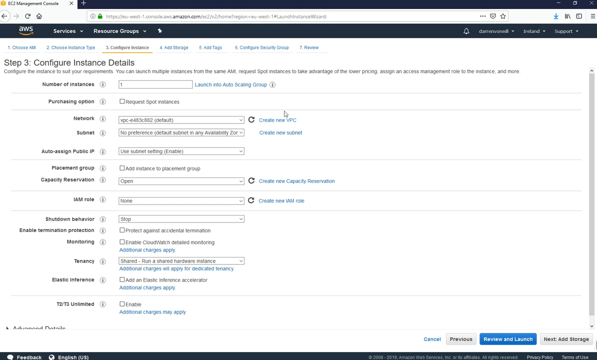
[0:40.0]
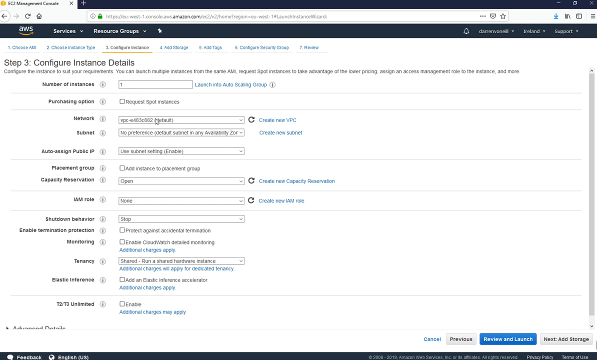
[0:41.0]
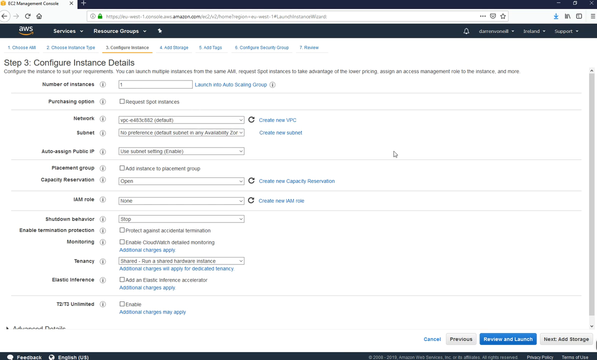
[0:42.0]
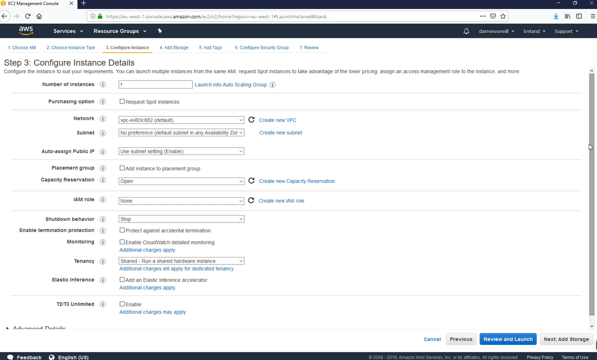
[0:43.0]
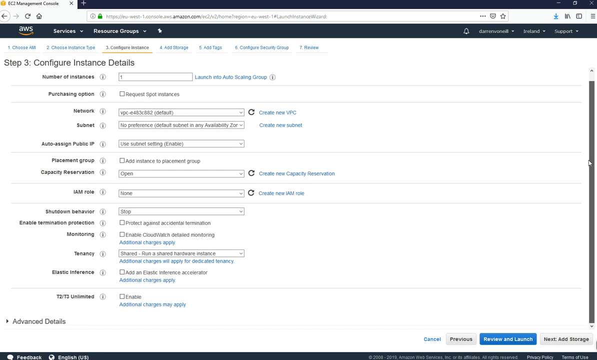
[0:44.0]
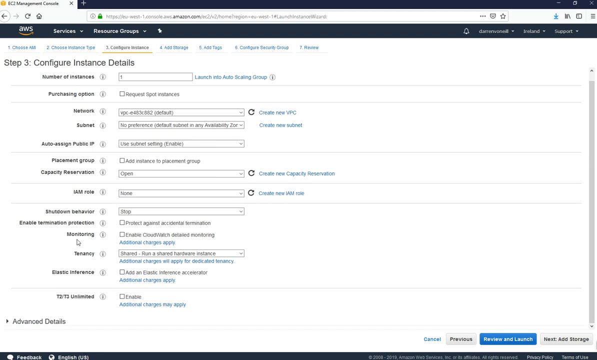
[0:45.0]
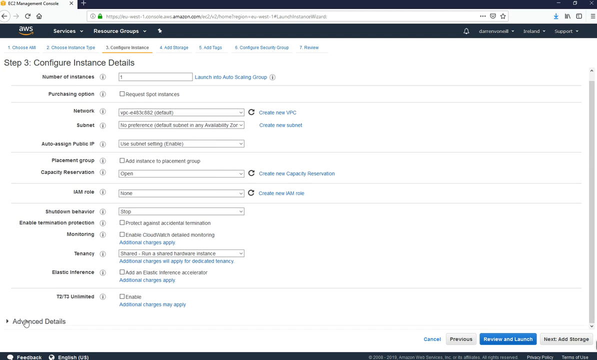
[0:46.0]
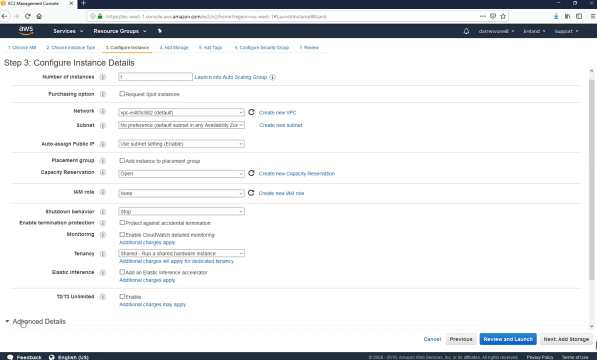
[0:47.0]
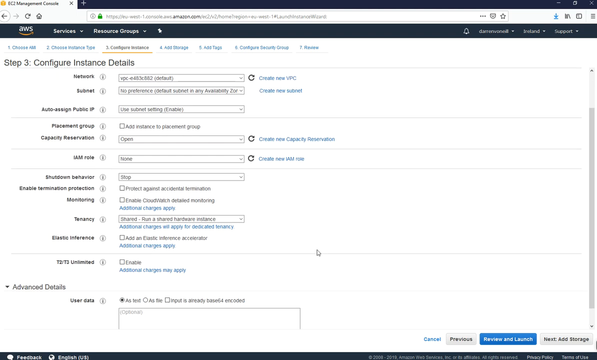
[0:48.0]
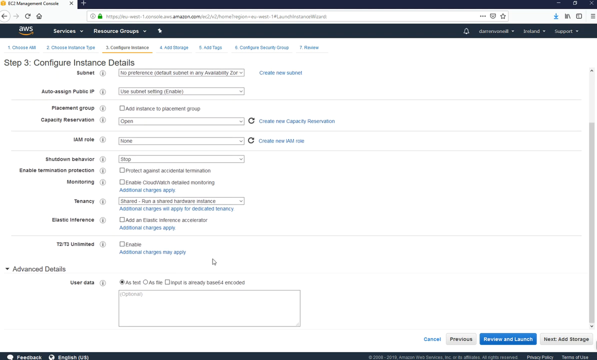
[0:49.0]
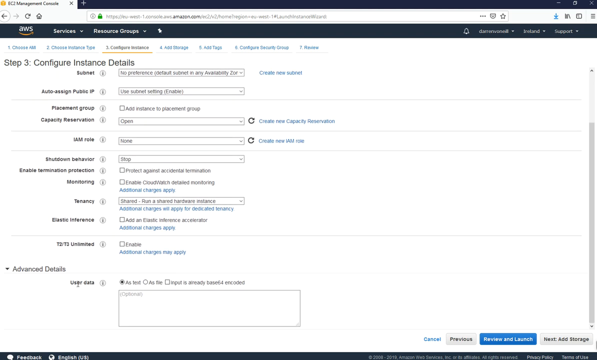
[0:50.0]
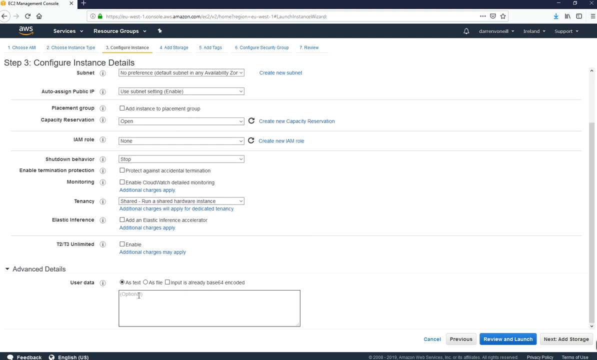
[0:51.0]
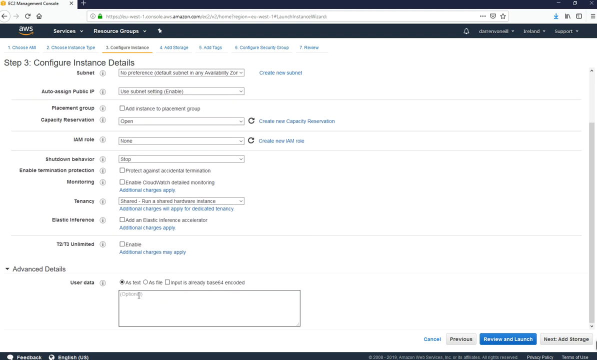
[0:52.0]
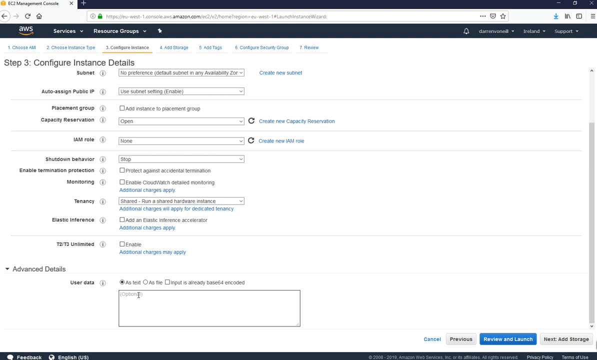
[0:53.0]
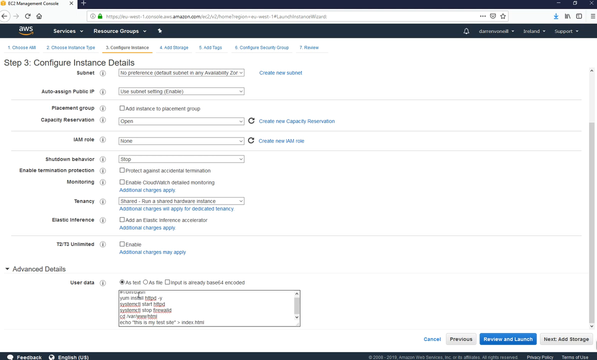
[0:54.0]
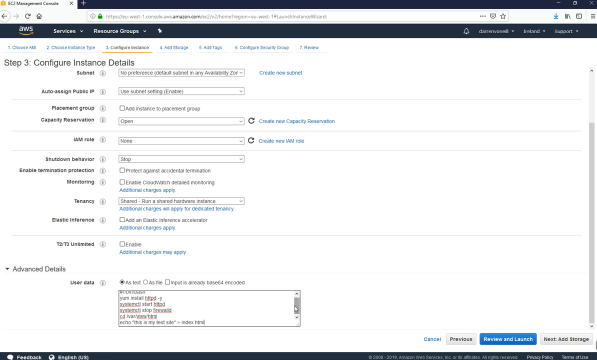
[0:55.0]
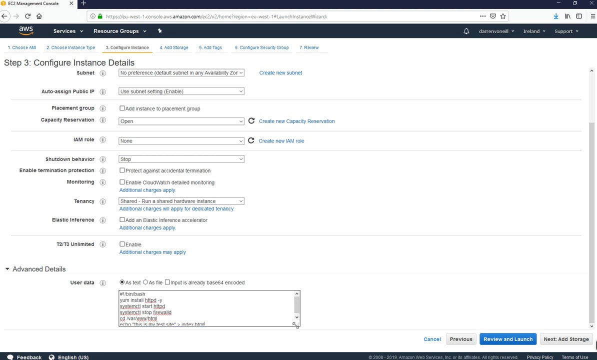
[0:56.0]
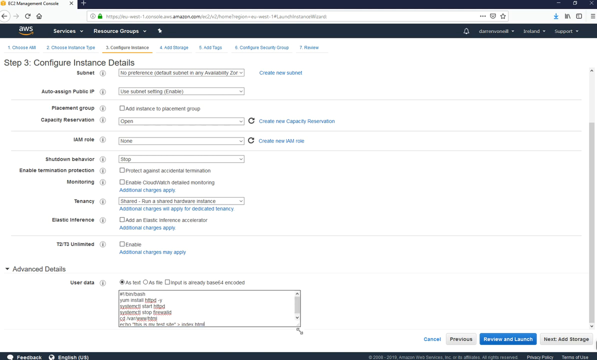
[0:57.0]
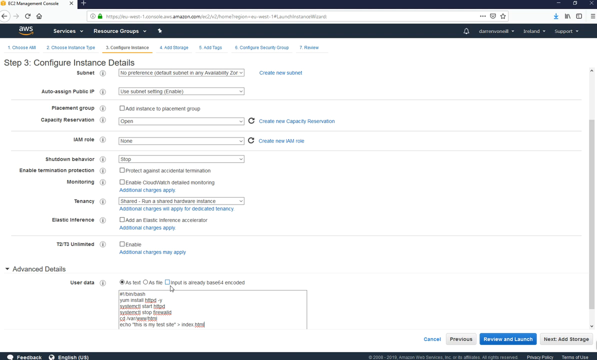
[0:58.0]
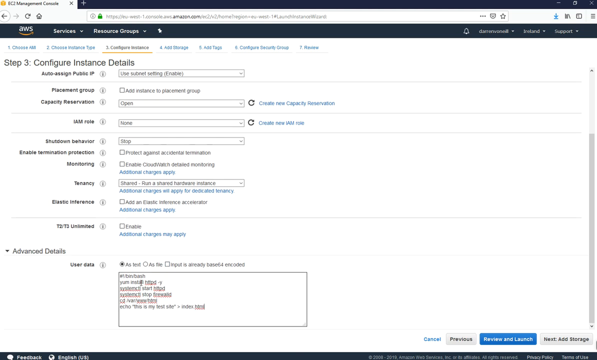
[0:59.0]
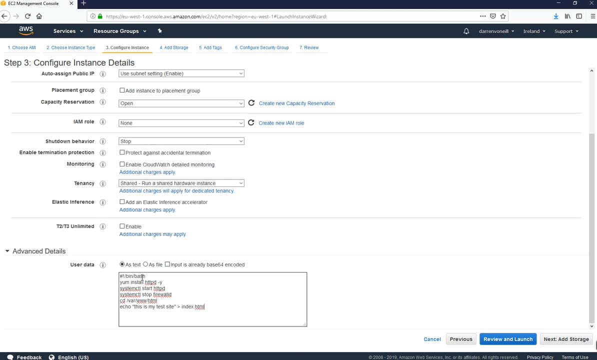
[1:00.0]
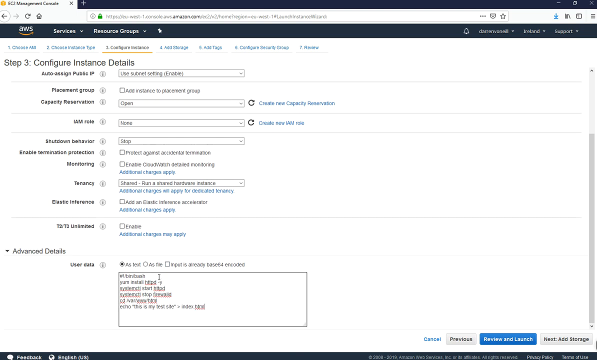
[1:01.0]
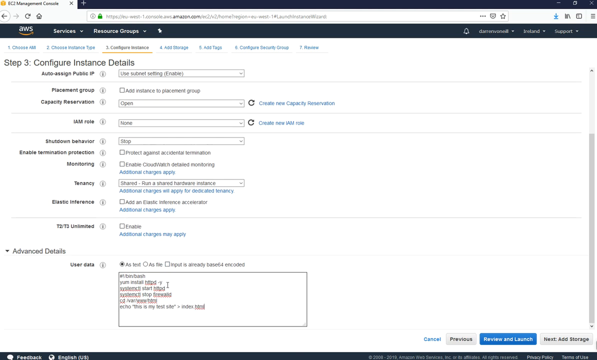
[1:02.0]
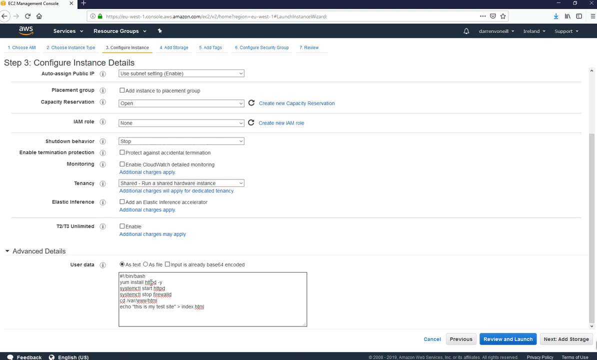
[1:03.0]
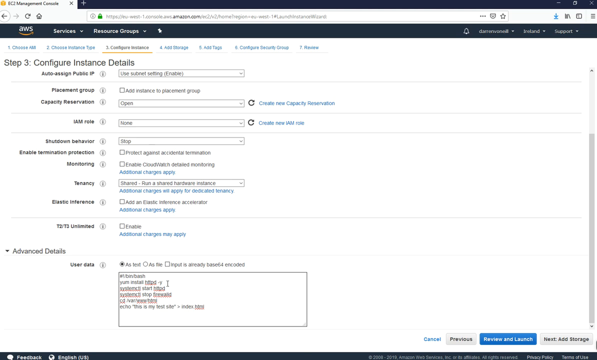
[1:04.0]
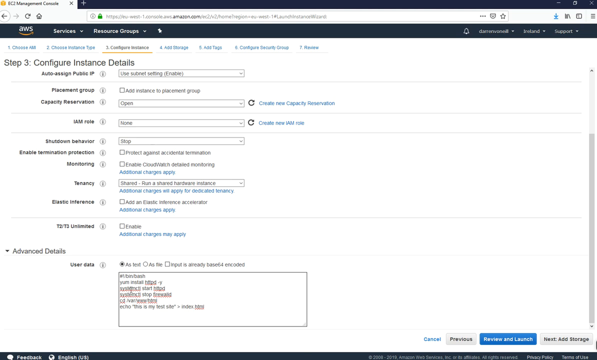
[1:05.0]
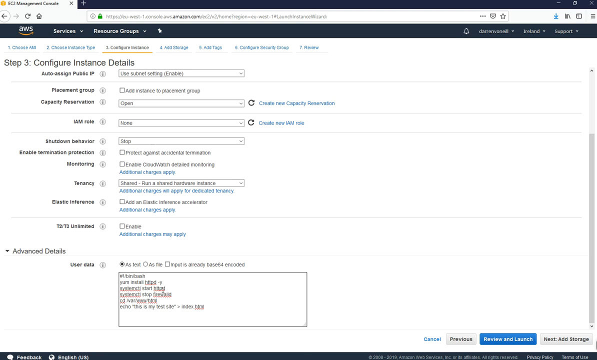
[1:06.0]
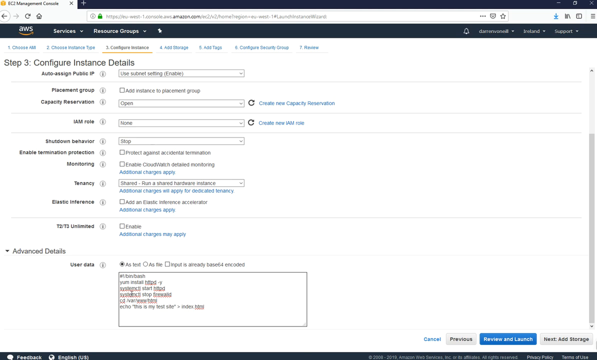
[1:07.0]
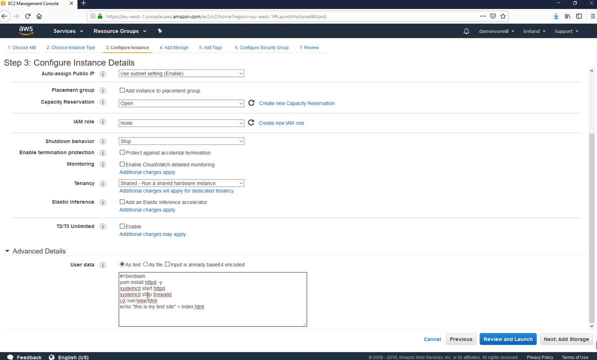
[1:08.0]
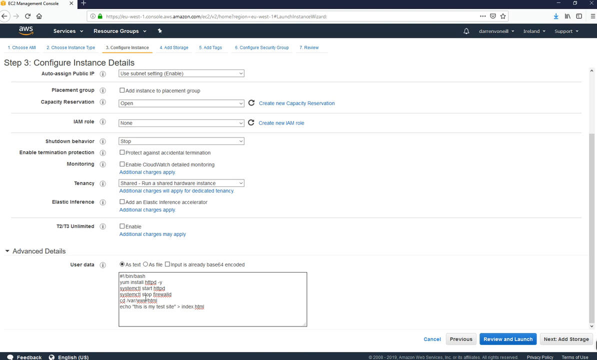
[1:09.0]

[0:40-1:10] A web page for an AWS services management console is open on a Windows PC. The current tab is Configure Instance, on step three, configure instance details; the page shows services and resource groups. The cursor stops on a drop-down box for Network, then continues to scroll down without clicking it, going all the way to the bottom left edge of the page. It stops on Advanced Details and continues down to a box for User Data, a box where one can write, with the text cursor blinking. Multiple lines of text then appear in the box, some underlined in red, and the cursor moves across the text within the box.